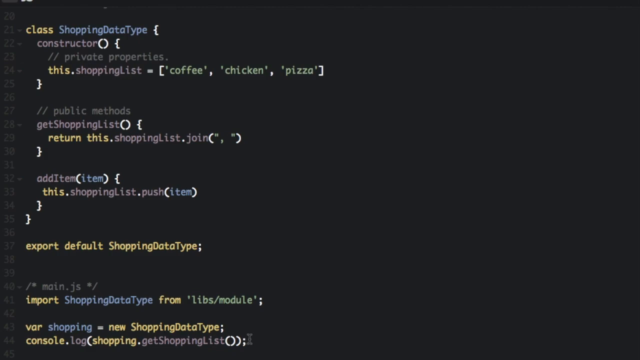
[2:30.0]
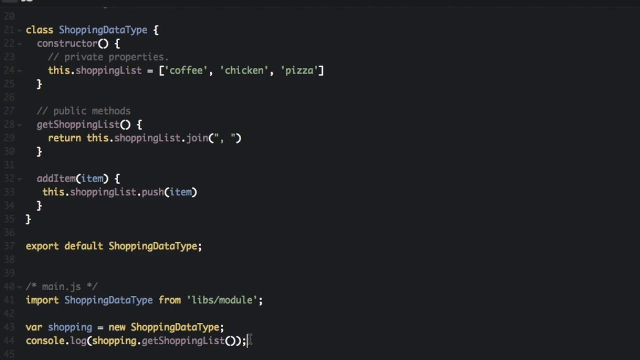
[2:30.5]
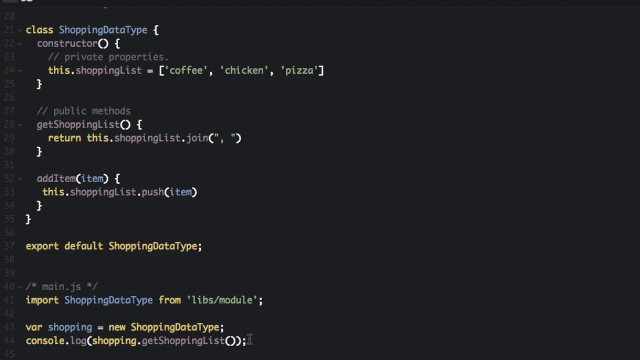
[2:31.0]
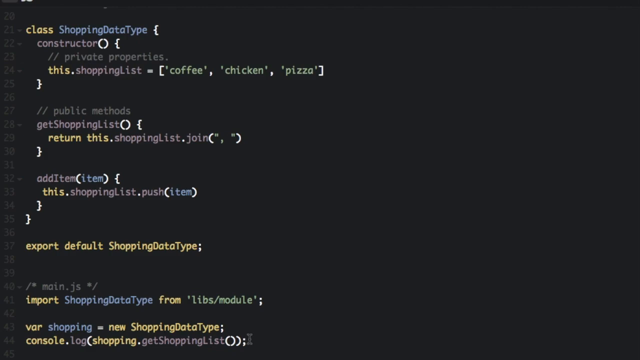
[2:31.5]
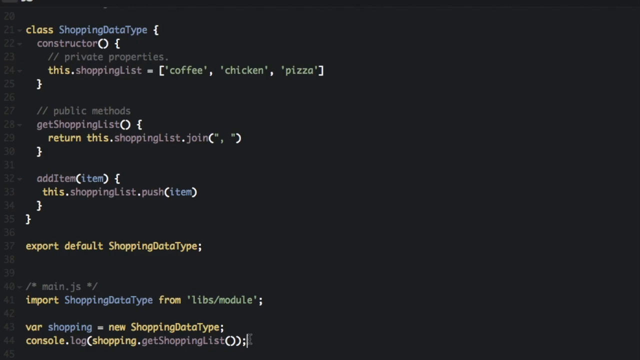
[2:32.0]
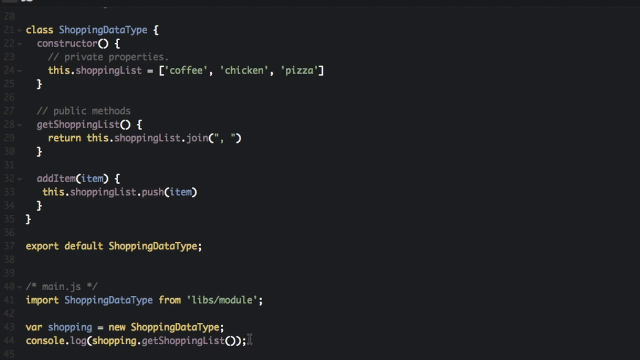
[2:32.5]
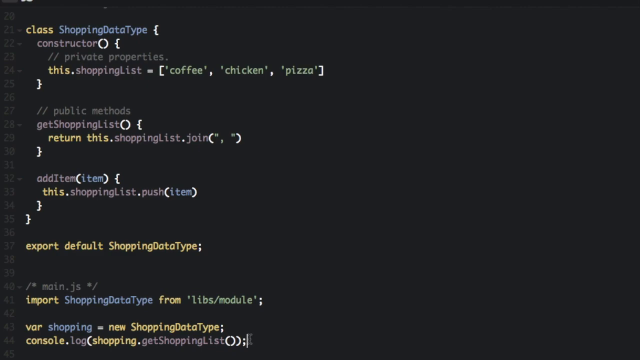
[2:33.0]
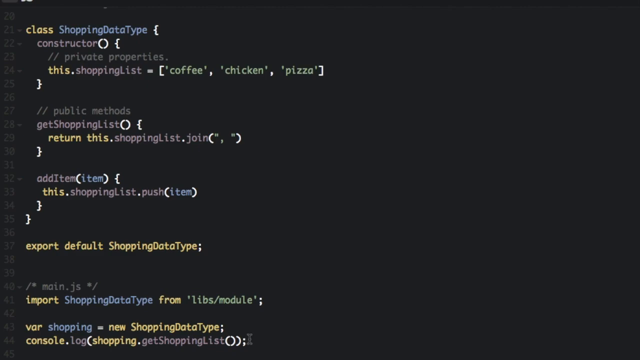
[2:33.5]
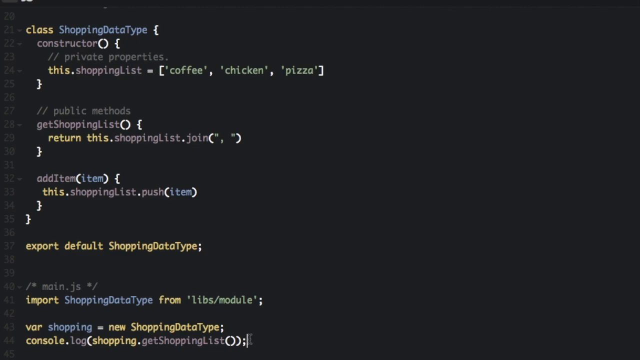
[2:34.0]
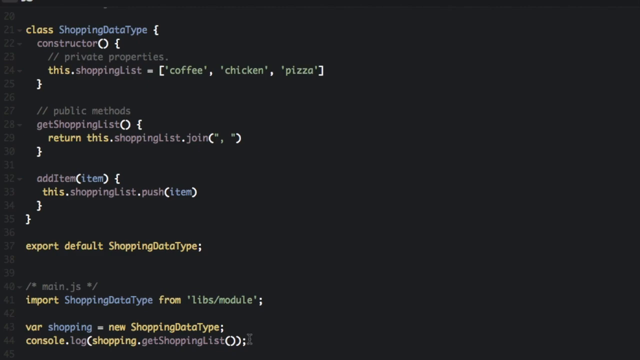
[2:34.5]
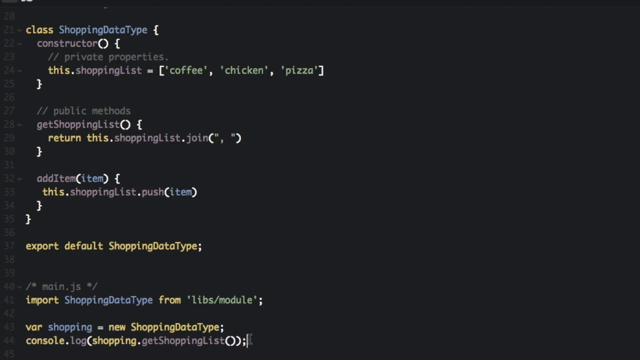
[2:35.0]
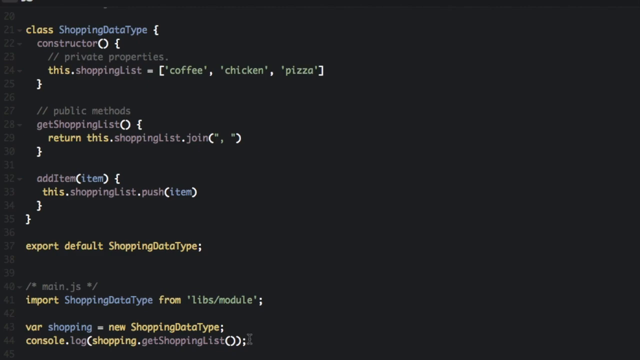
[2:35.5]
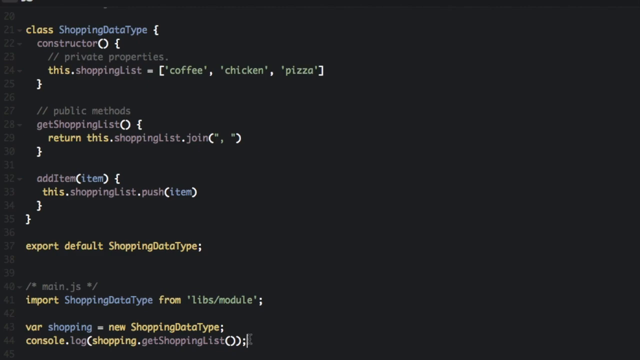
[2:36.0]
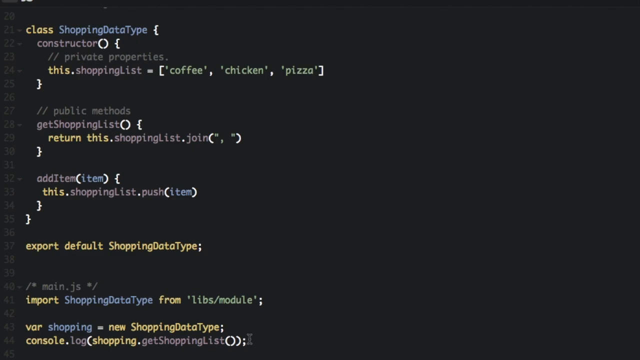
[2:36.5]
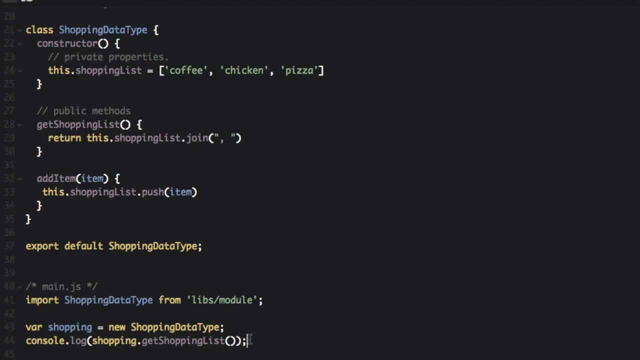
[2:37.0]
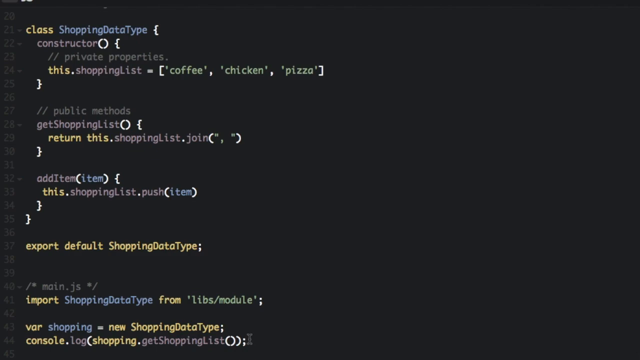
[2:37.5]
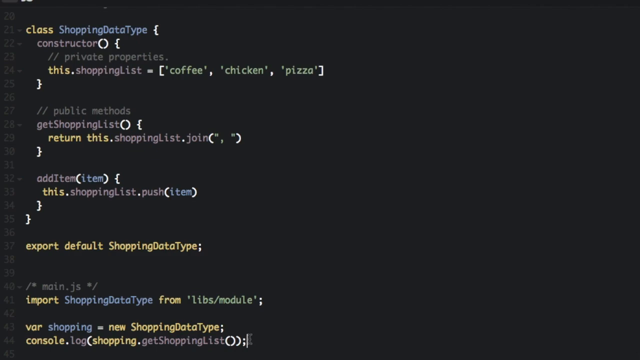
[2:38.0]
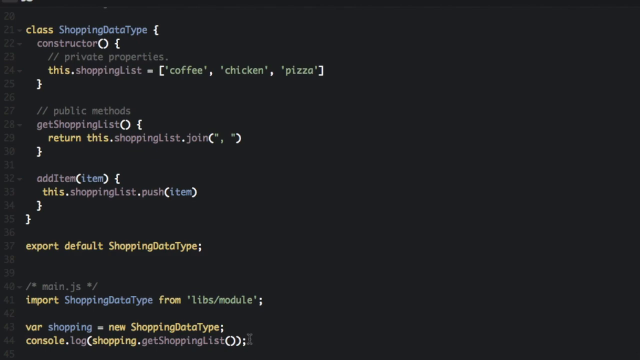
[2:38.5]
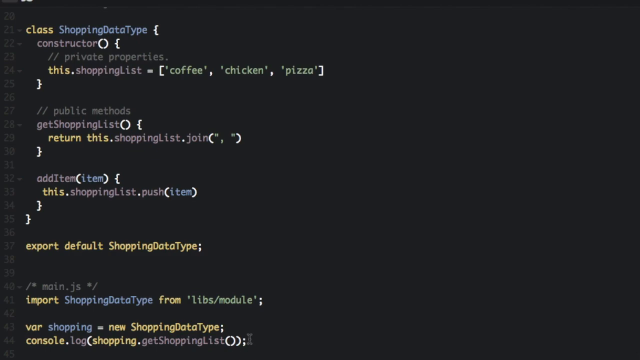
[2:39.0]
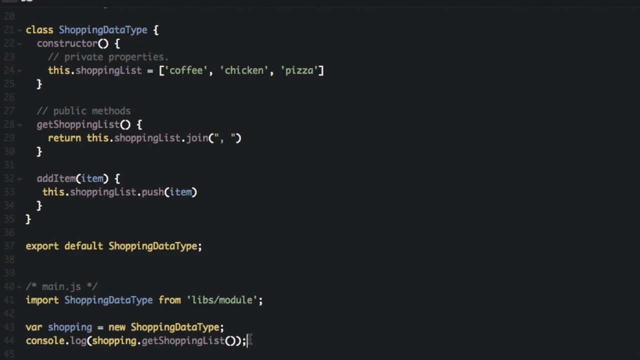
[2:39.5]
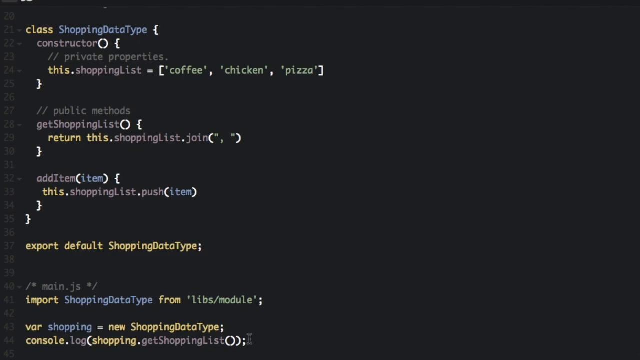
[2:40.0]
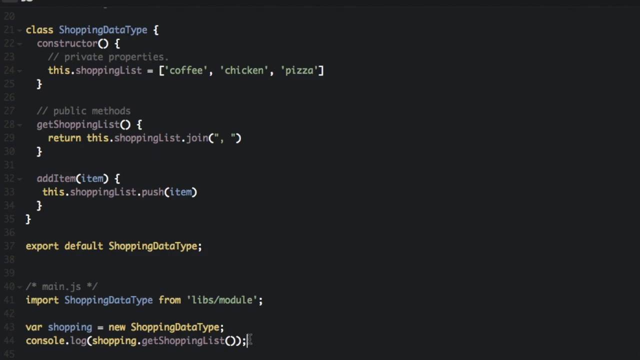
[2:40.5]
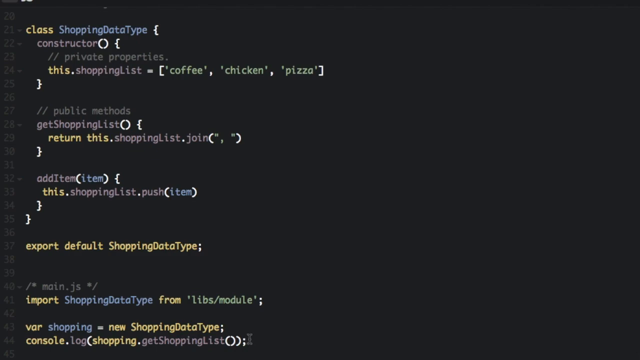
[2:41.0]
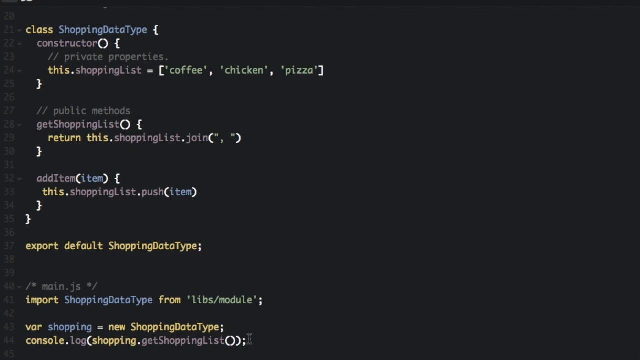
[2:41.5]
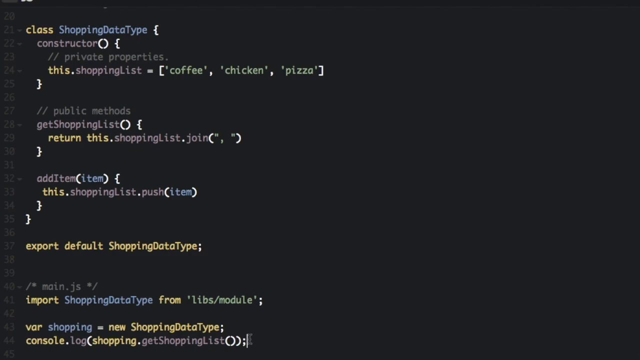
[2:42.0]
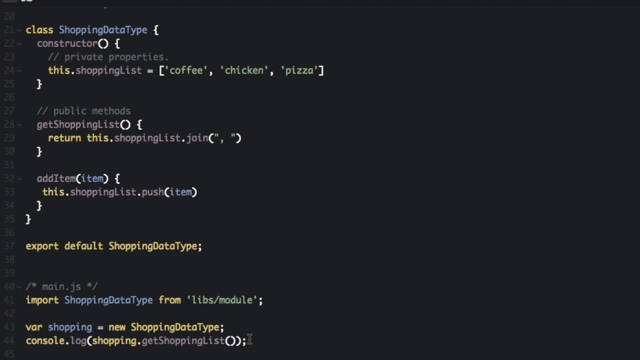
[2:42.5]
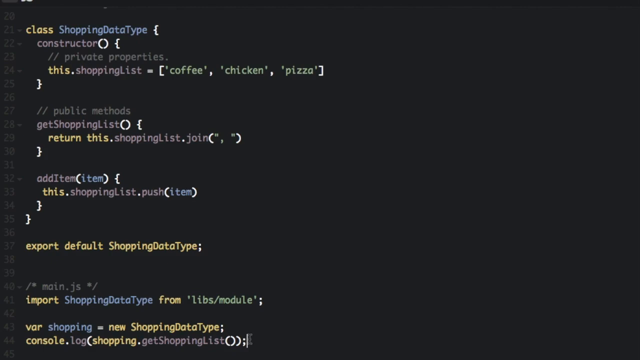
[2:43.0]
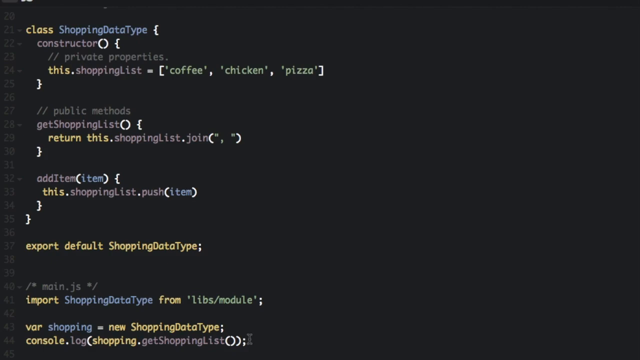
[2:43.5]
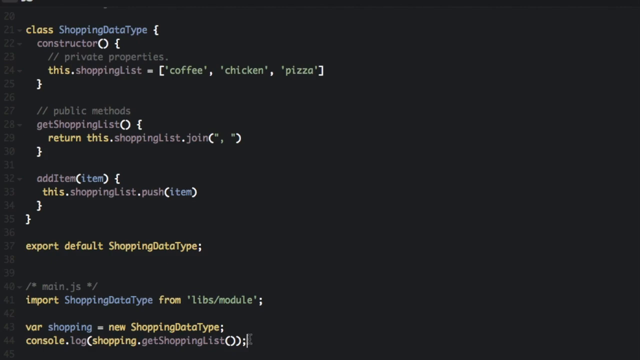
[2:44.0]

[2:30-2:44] Line 43 says "VAR shopping - new ShoppingDataType;". Line 44 has "console.log", a parenthesis, "shopping.getshoppinglist", and then a series of open and closed parentheses. On line 43, "VAR" is in yellow, the word "shopping" after it is light blue, the space is white, and "new ShoppingDataType" is in yellow, with a capital S, D and T.